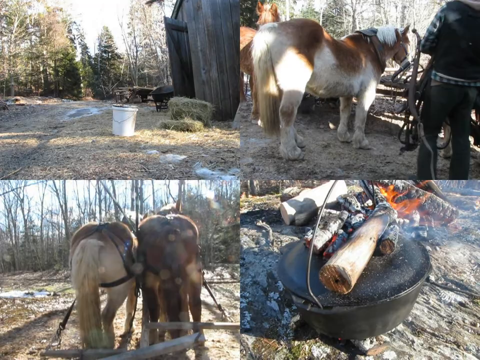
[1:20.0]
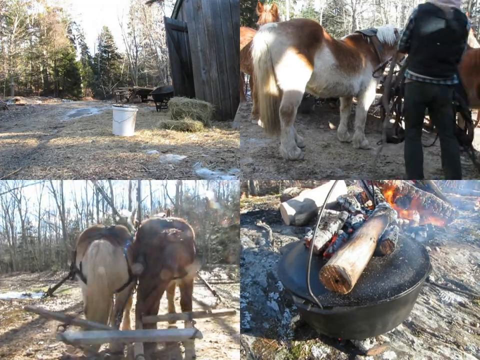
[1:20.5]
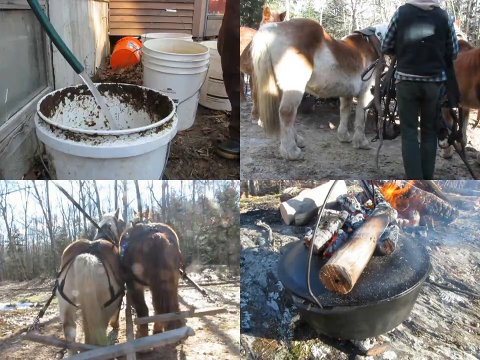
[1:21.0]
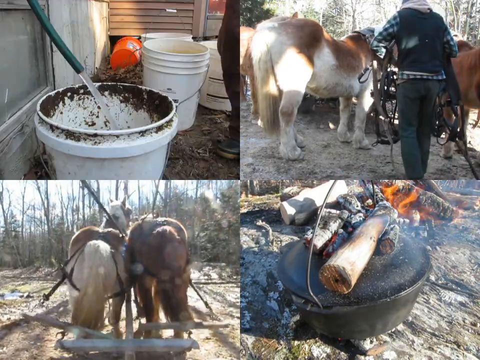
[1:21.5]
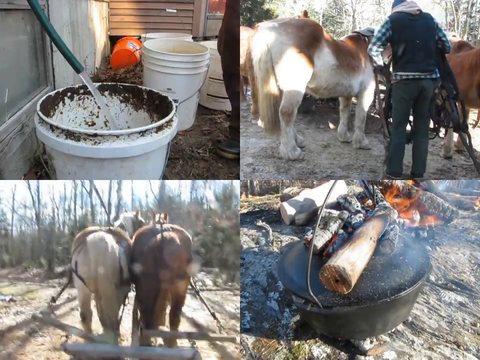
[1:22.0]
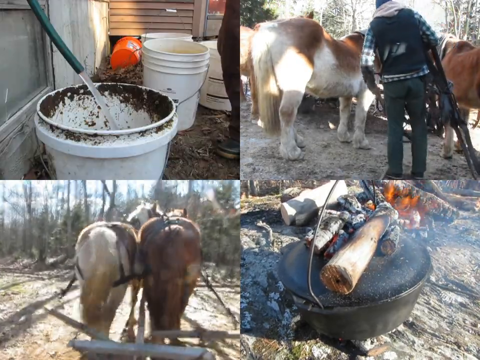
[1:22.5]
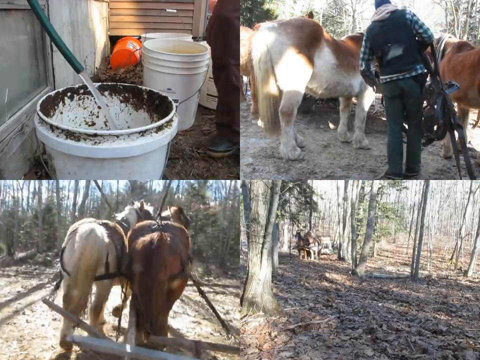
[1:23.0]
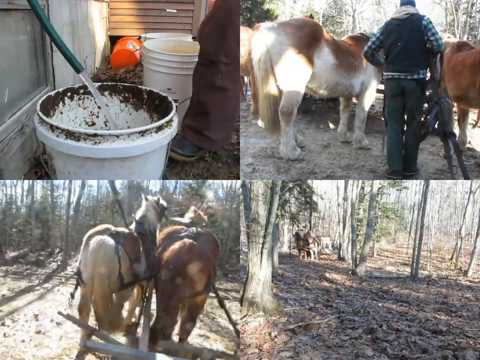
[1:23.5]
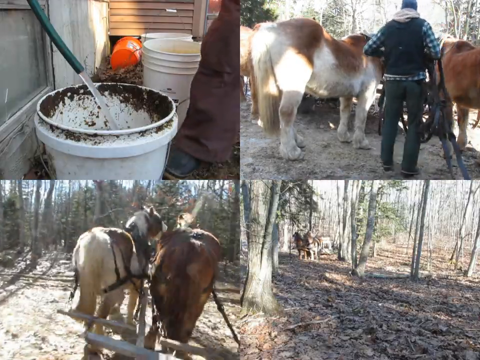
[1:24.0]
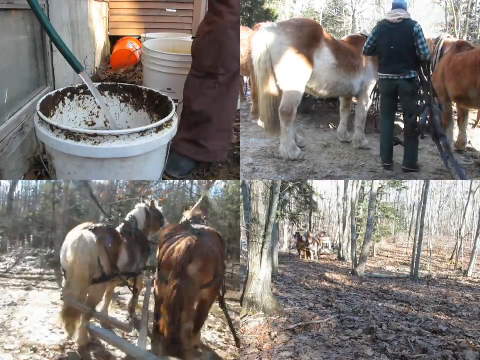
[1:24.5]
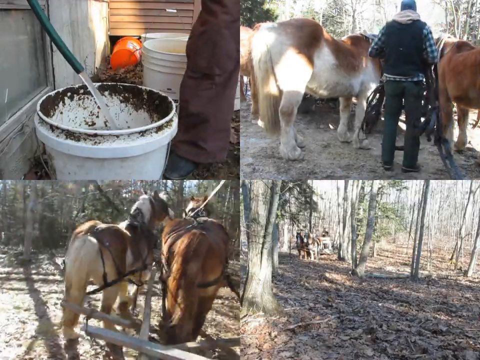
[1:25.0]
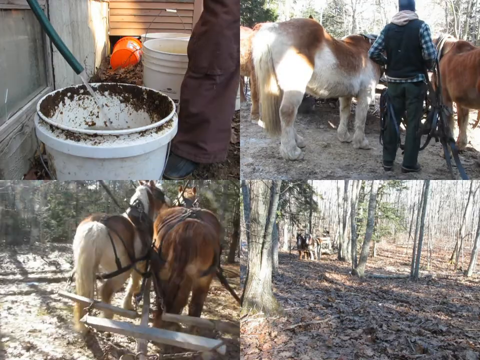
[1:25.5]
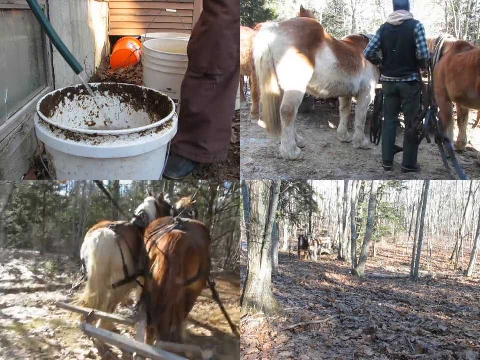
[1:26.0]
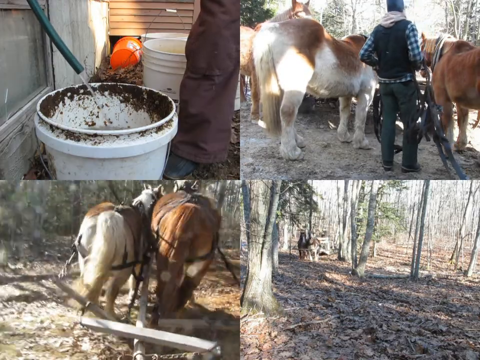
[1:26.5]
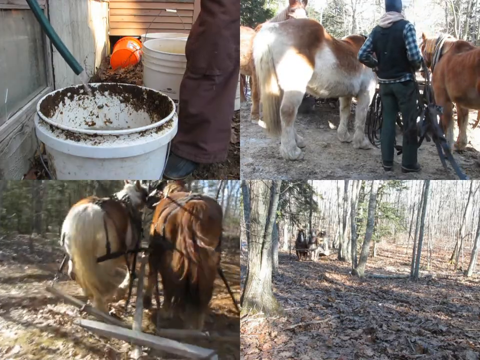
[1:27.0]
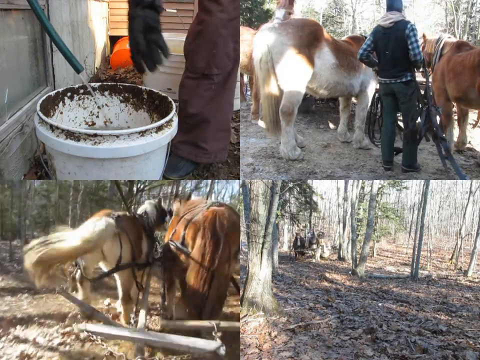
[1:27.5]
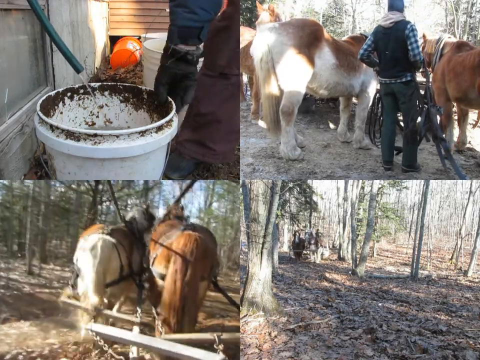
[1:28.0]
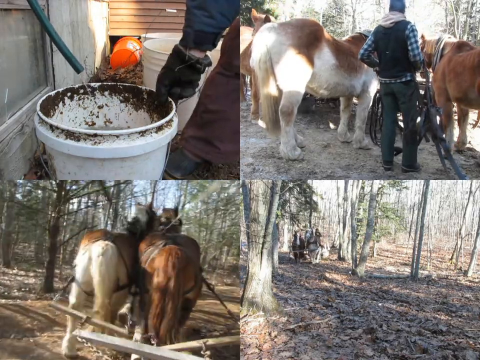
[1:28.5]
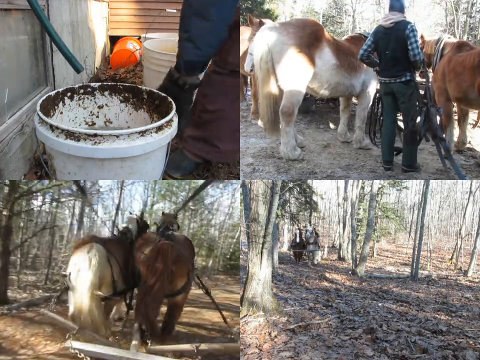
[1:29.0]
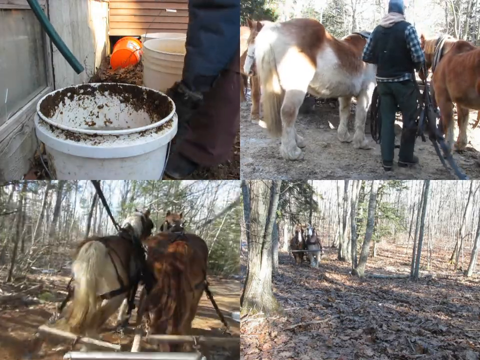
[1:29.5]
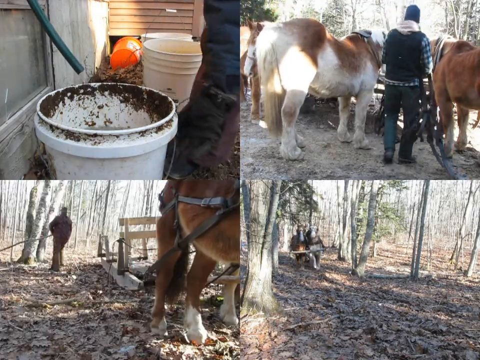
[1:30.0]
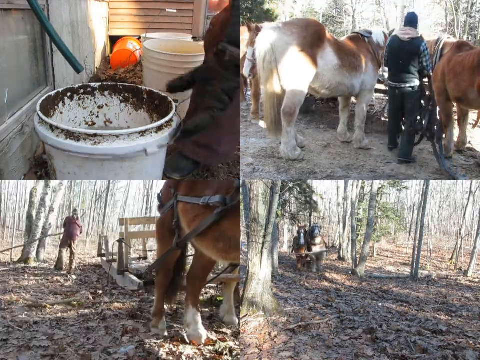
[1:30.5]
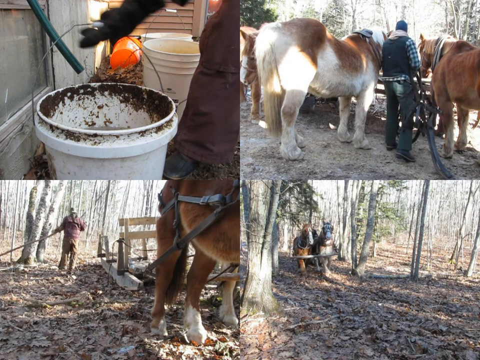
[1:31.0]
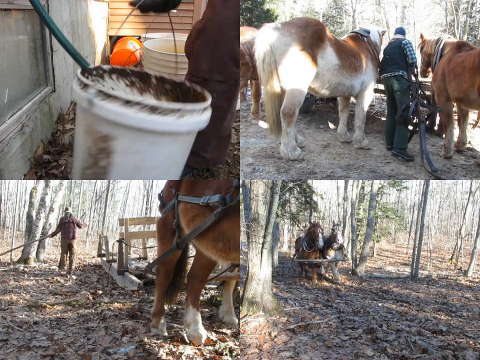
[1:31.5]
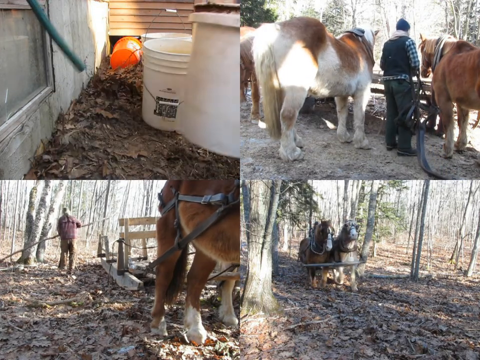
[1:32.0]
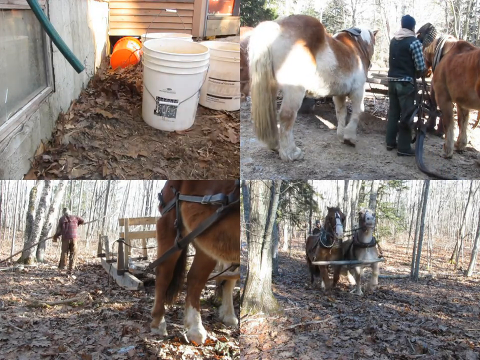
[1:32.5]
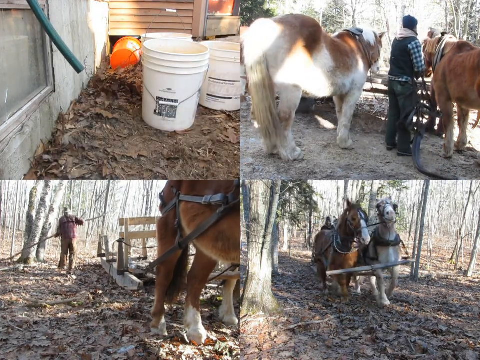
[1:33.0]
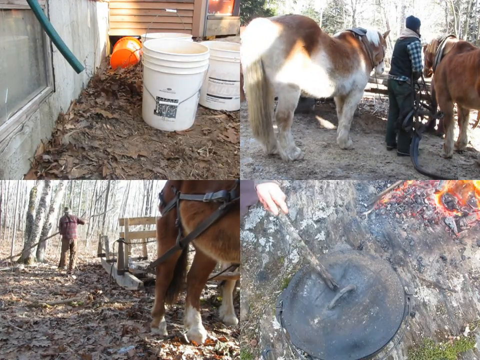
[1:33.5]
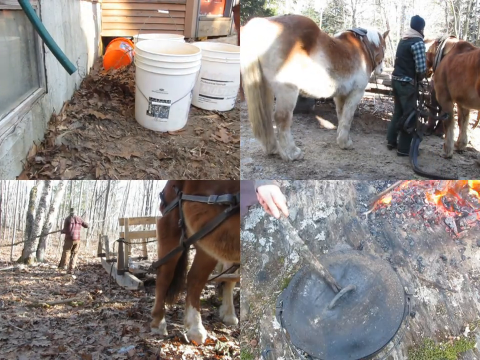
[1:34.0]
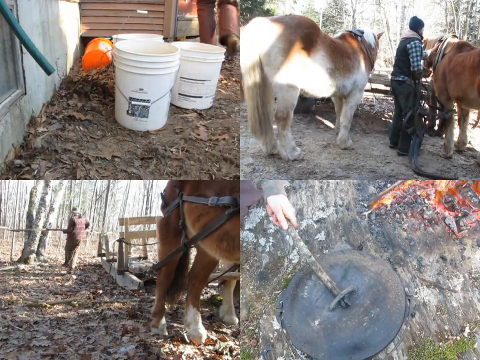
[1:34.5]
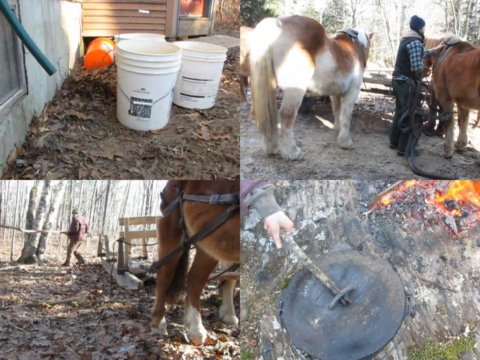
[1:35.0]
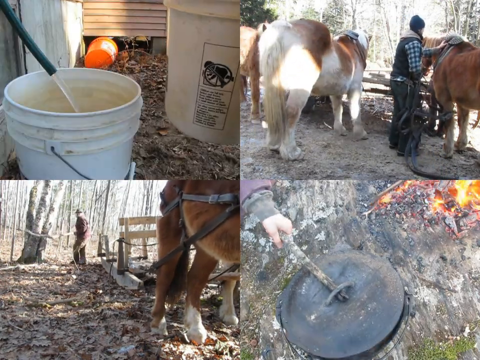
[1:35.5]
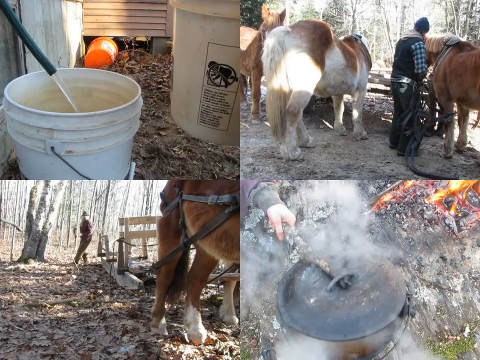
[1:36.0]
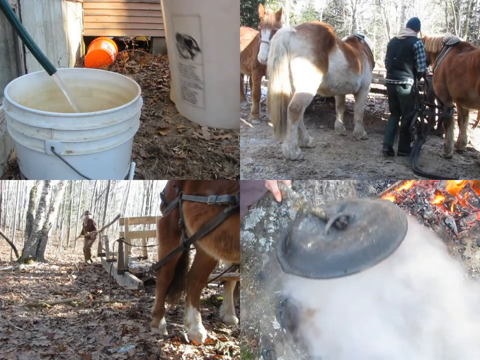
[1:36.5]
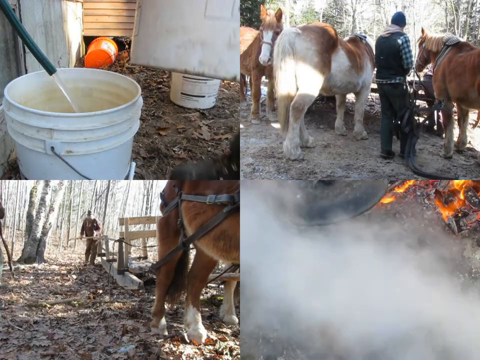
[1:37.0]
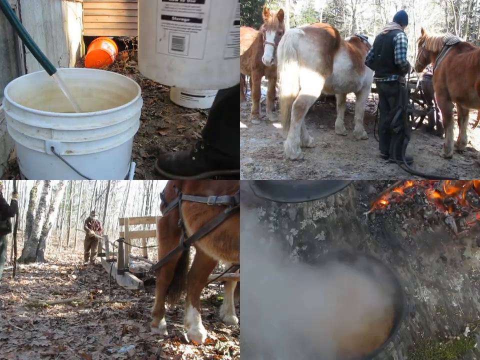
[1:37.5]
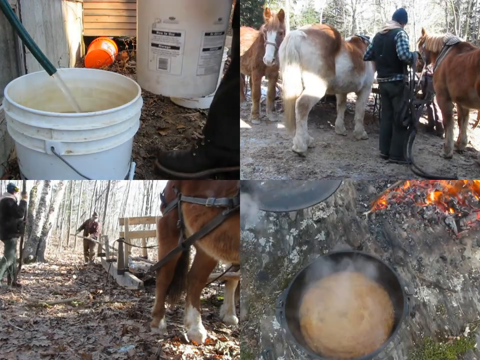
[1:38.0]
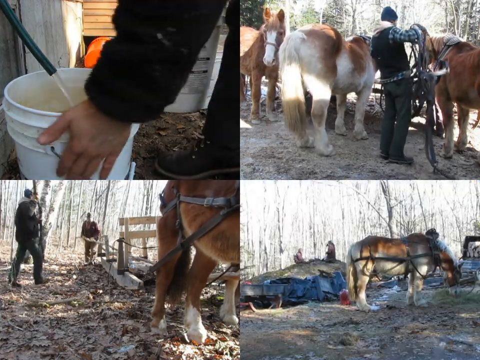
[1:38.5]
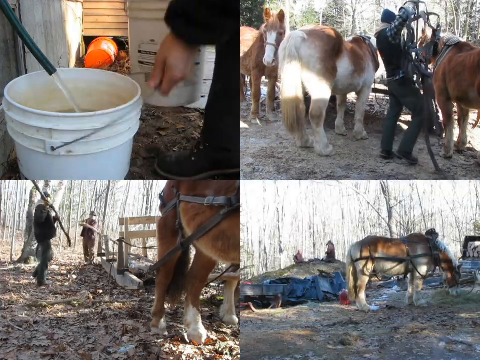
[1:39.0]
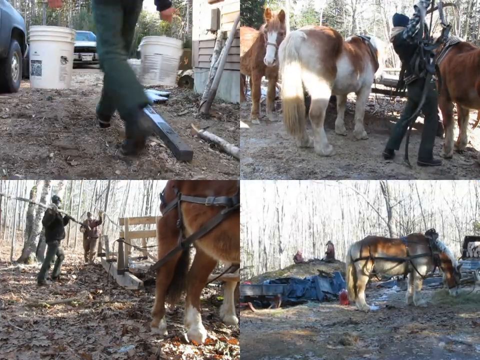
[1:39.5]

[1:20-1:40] The screen shows the hay and the bucket outside the barn; the two horses standing next to each other, preparing to be hitched up to the cart or wagon; in the bottom left, the two horses harnessed and hitched to the cart or wagon together; and the black kettle with charred pieces of wood on top of the lid. The top left cuts to water flowing from a hose into a white bucket. The bottom right shows the two horses pulling a cart through the woods, and the bottom left shows a back view, as though the person riding in the cart is filming the backs of the horses as they pull it. In the top left, the woman in the purple outfit picks up the bucket of water, walks away, and then fills another bucket with water. The bottom right cuts to the two horses galloping through the woods, pulling the cart. The bottom left shows a man in the background doing something with a stick, with the horses attached to the cart in the foreground. The bottom right then cuts to someone using a stick to lift the lid off the black cauldron; a large amount of steam comes out of the kettle, revealing some type of food in the bottom. Next it cuts to the horse with a harness on standing next to a group of people. The woman is shown carrying a bucket of water, while the top right still shows a man tending to the two horses.